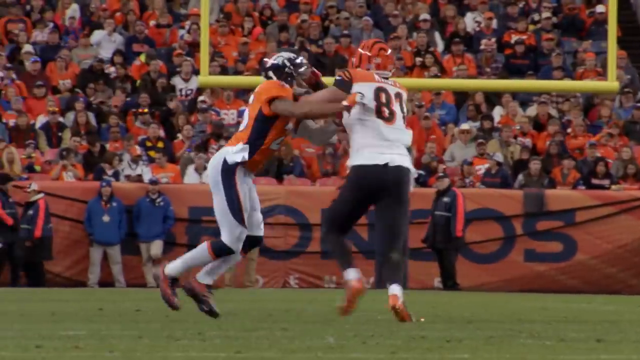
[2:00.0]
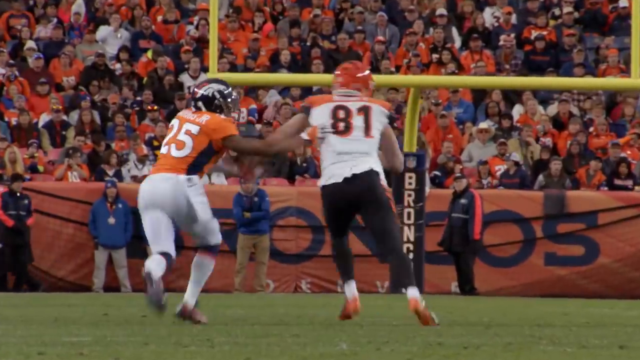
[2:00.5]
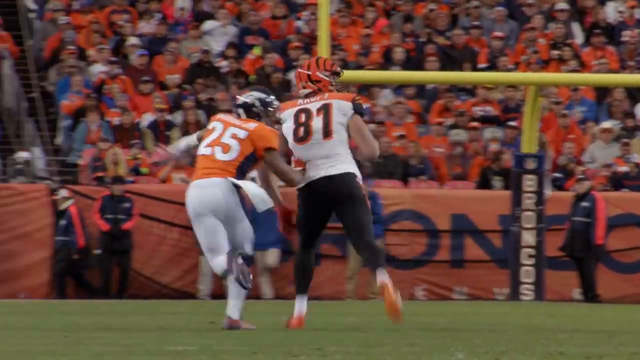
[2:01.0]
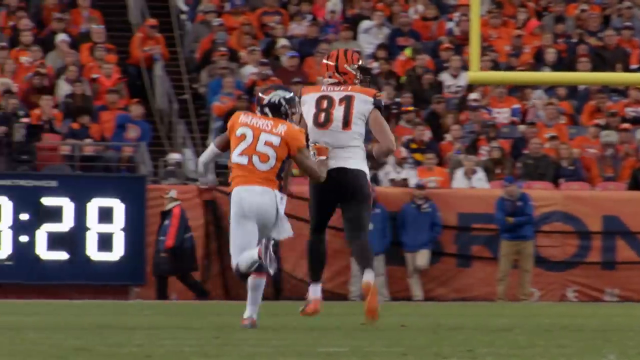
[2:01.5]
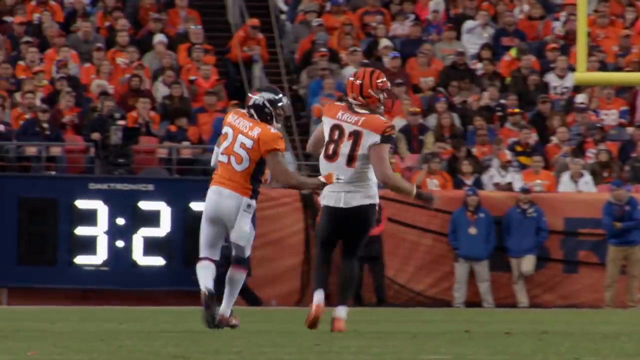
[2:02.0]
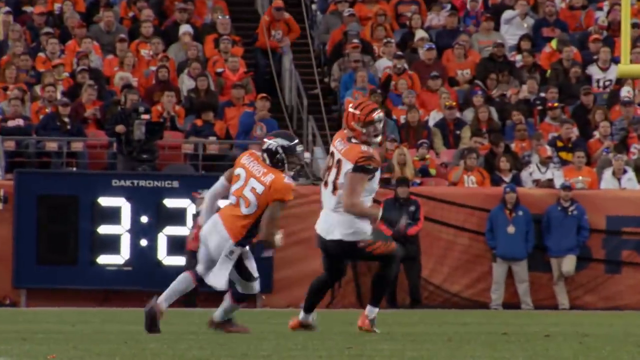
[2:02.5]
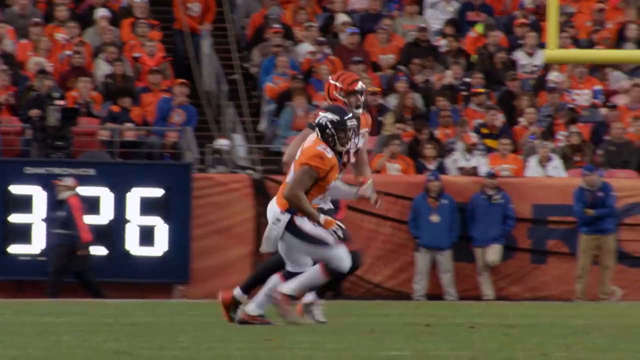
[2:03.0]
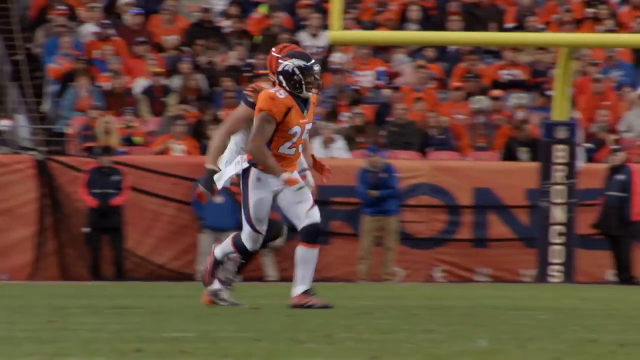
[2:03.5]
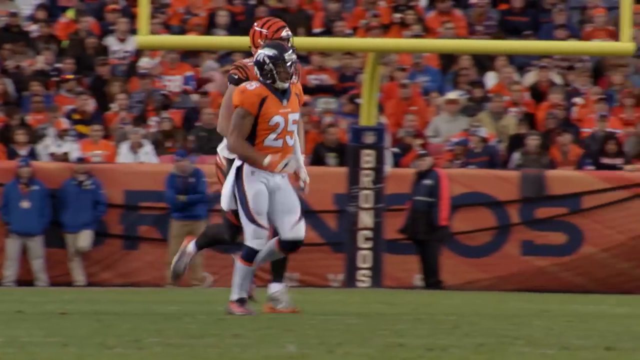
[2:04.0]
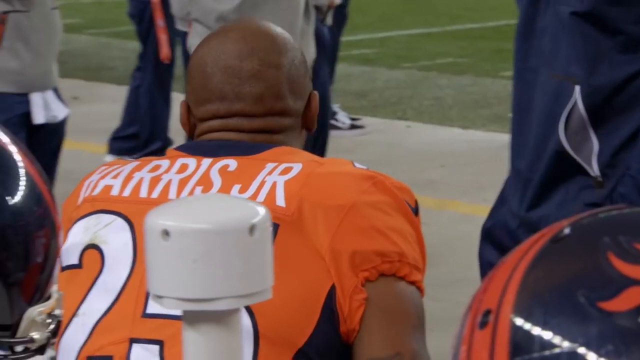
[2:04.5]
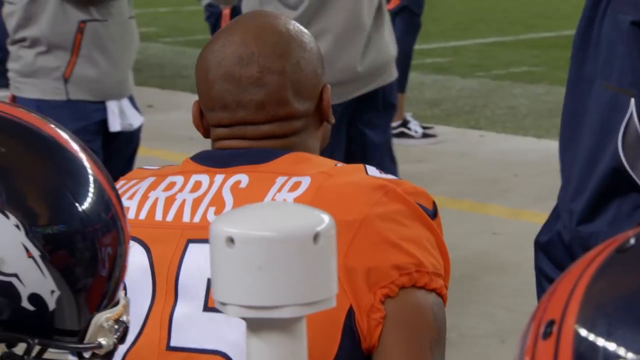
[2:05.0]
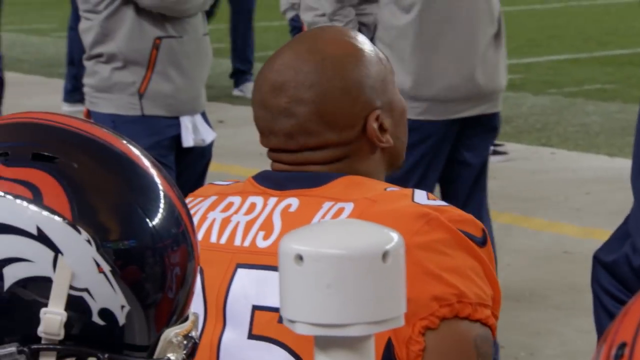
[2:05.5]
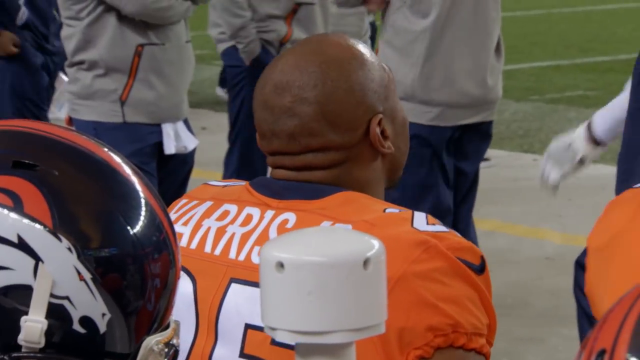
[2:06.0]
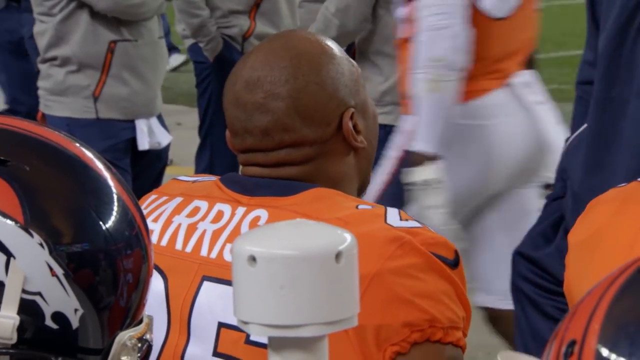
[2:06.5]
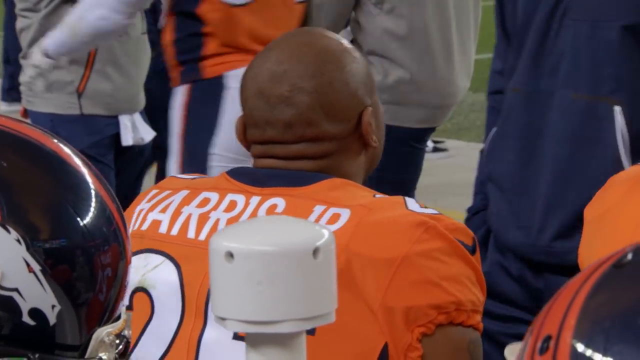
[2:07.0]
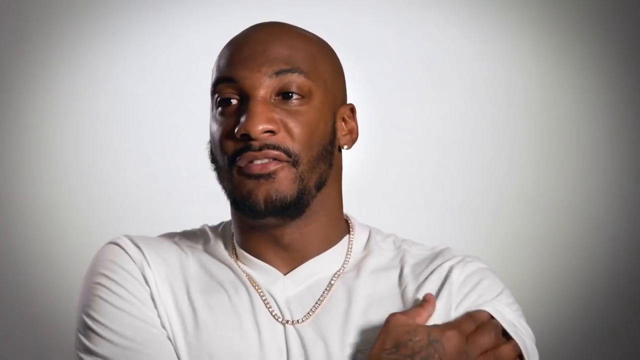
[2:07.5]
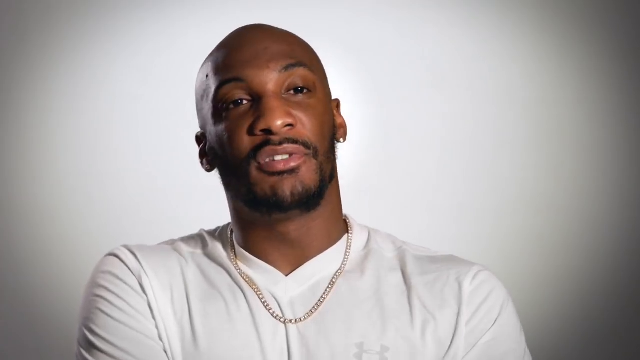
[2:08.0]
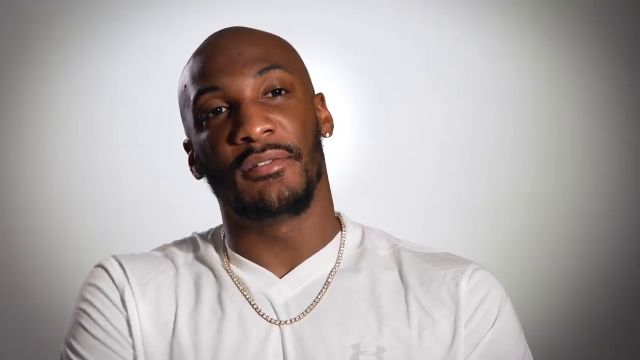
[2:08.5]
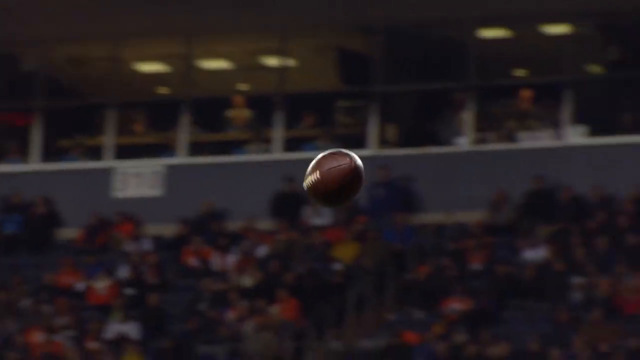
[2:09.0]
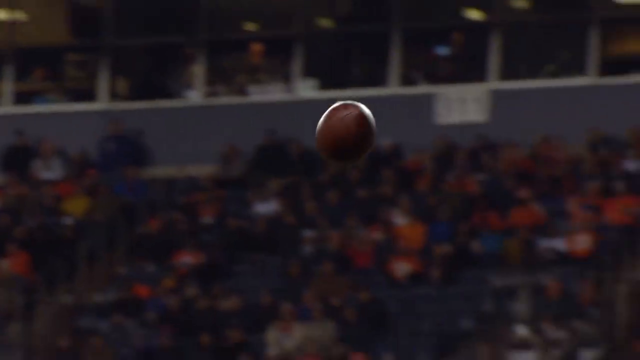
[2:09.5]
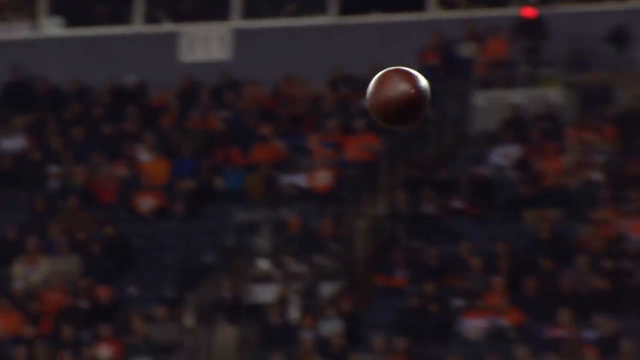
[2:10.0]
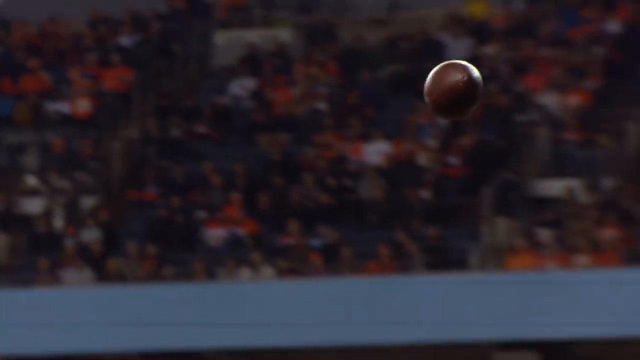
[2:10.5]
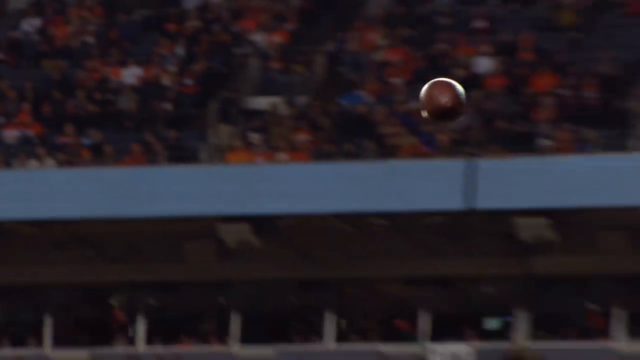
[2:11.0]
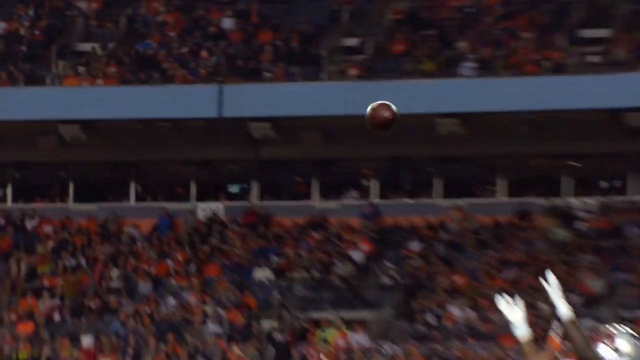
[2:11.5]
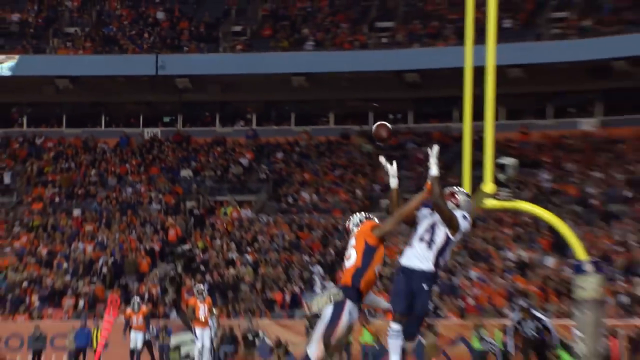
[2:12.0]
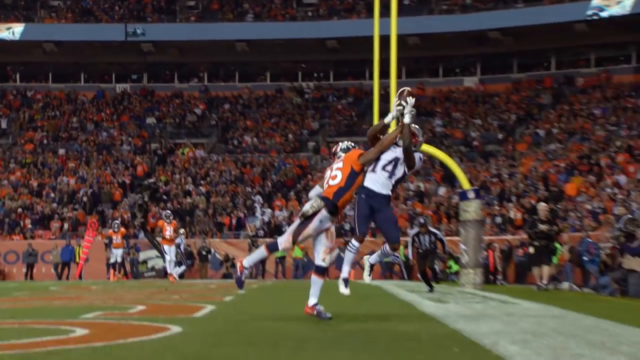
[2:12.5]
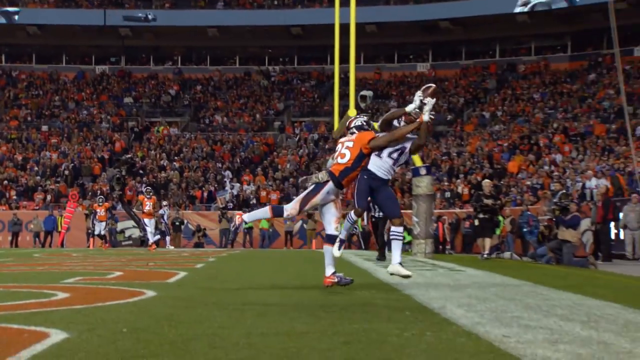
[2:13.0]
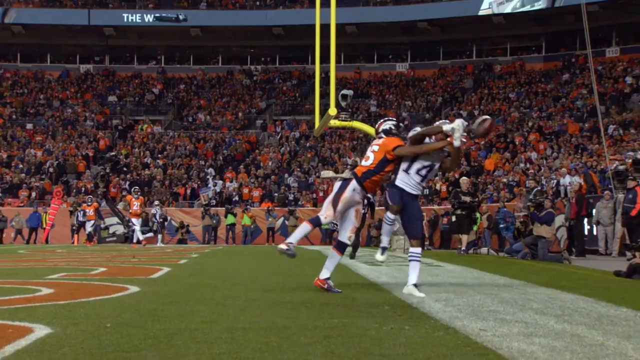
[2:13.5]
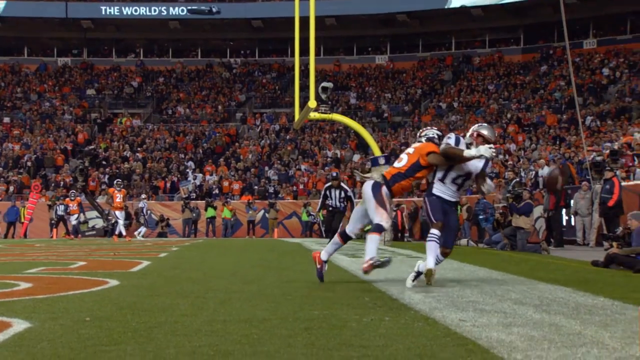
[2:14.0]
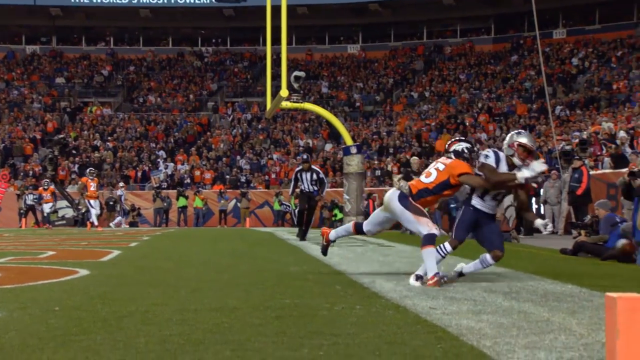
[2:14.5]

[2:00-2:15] Chris Harris Jr. is on the field against Cincinnati Bengals number 81. The video cuts to him sitting on the bench, showing the back of his bald head as he talks to people whose faces are cut off, with only their bodies visible. It cuts back to Aqib talking, then to a slow-motion, very close-up video of a football spiraling through the air, with people in the stands in the background faded and out of focus. The shot widens to reveal a receiver, apparently a Patriot, against Chris Harris Jr. at the back of the end zone, and Harris Jr. pushes him out of the end zone before he can make the catch.